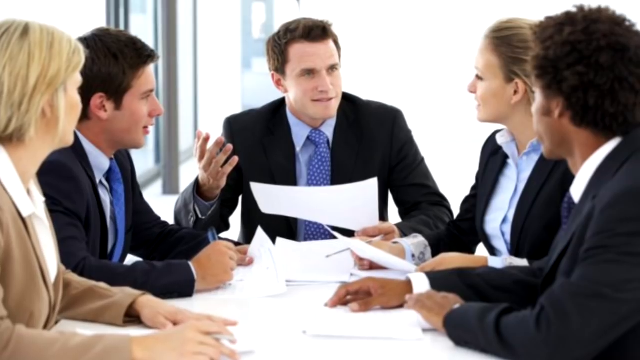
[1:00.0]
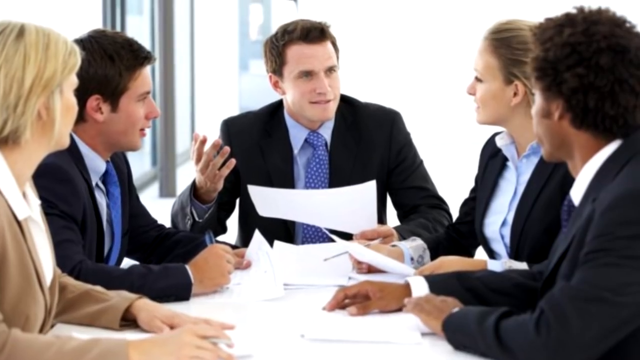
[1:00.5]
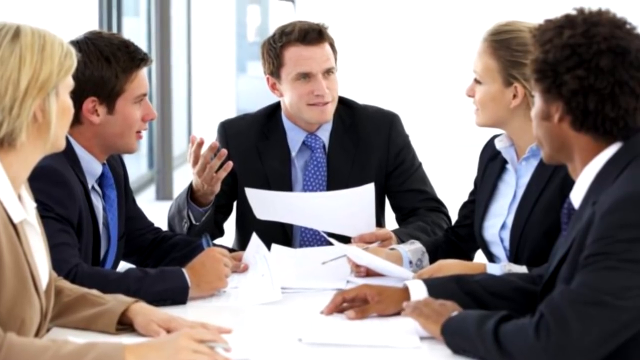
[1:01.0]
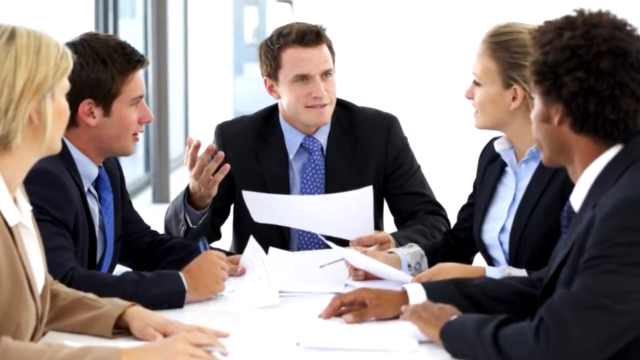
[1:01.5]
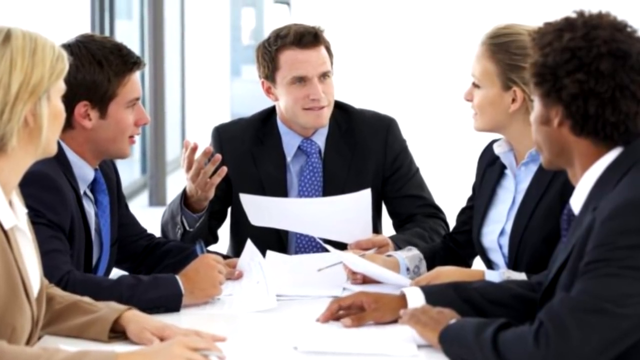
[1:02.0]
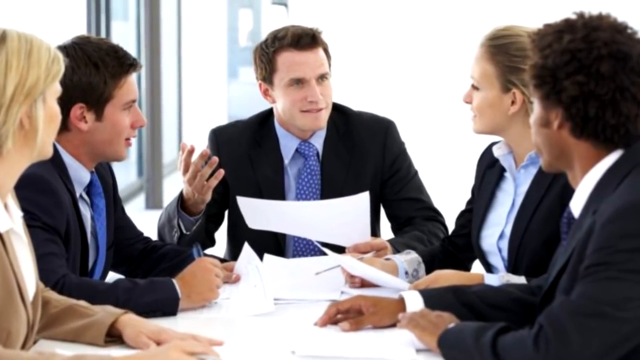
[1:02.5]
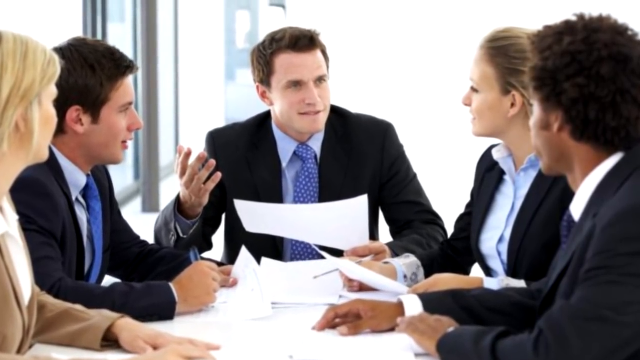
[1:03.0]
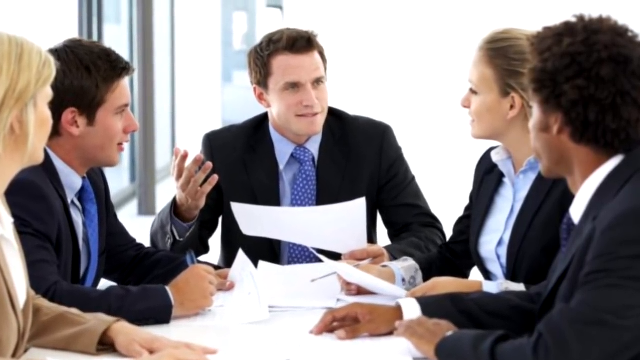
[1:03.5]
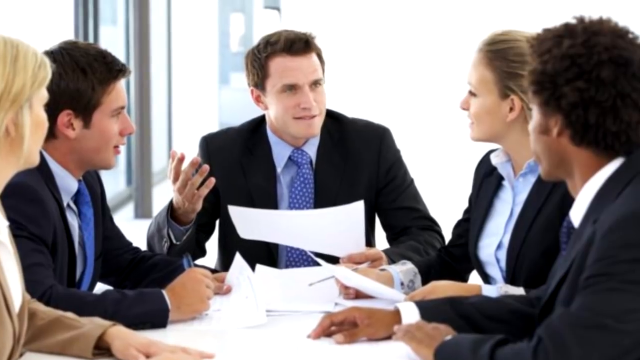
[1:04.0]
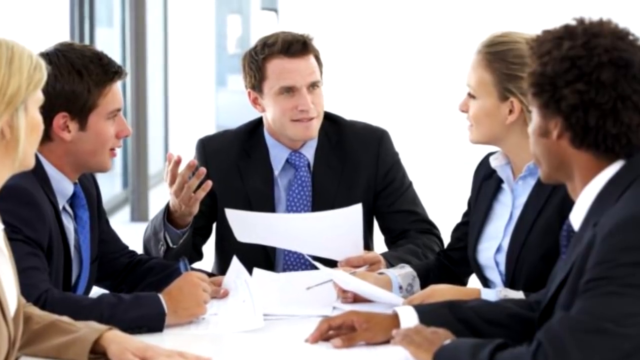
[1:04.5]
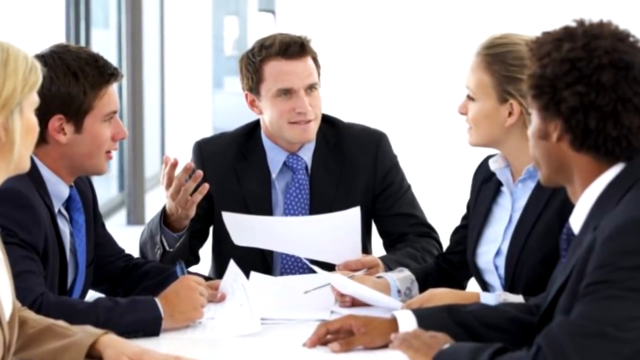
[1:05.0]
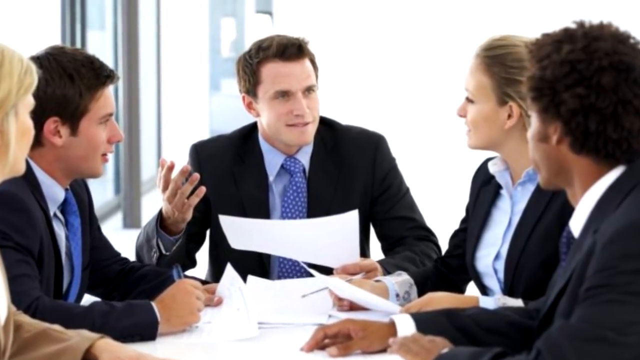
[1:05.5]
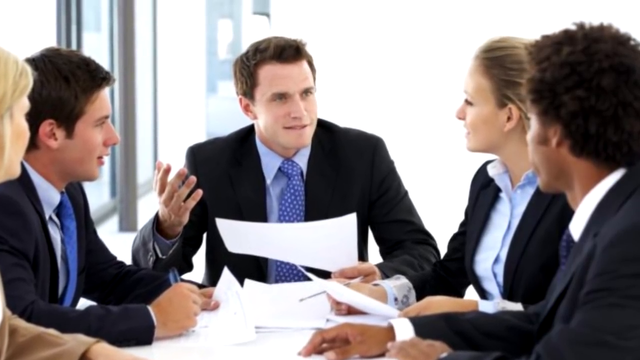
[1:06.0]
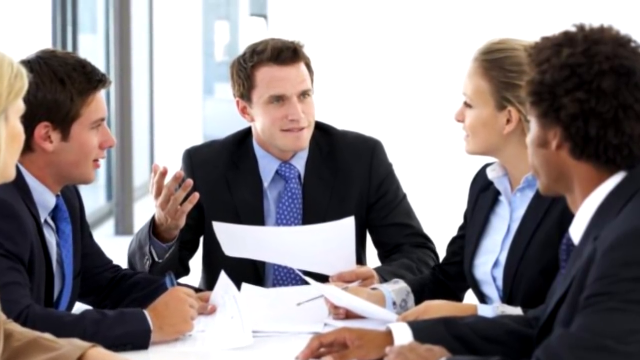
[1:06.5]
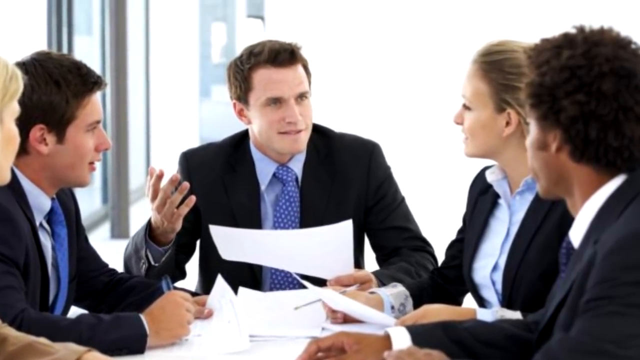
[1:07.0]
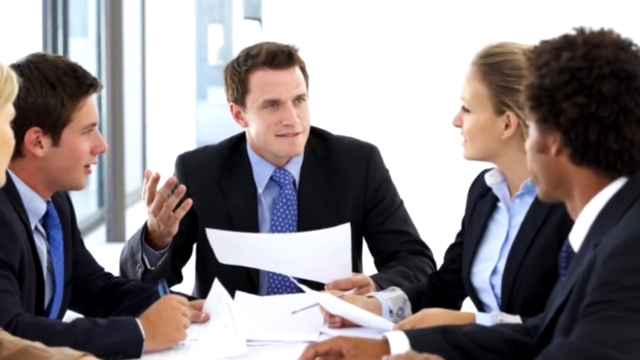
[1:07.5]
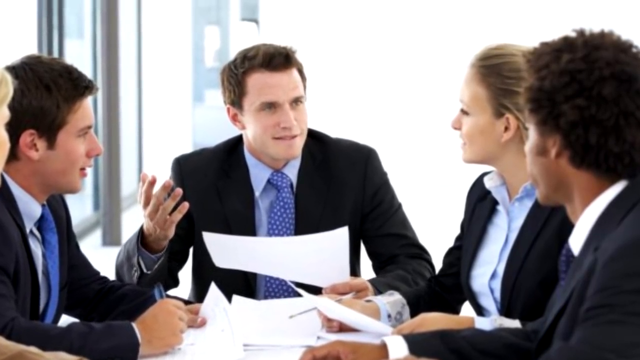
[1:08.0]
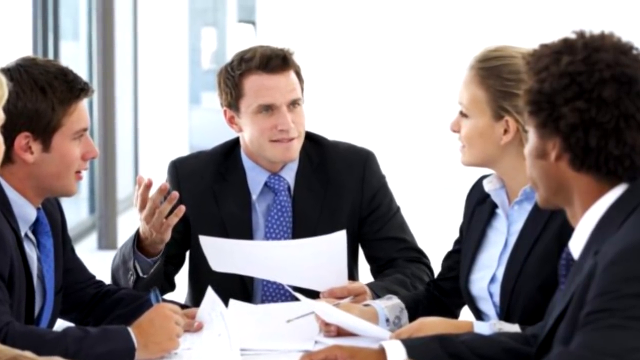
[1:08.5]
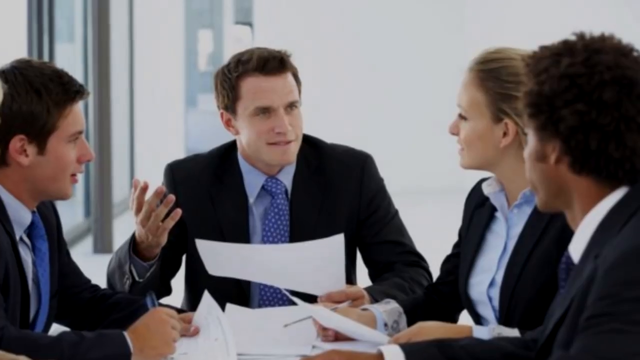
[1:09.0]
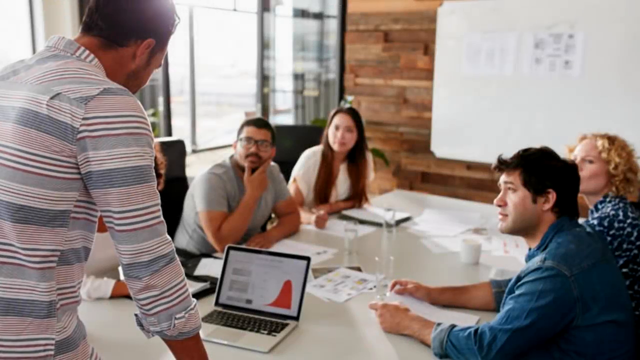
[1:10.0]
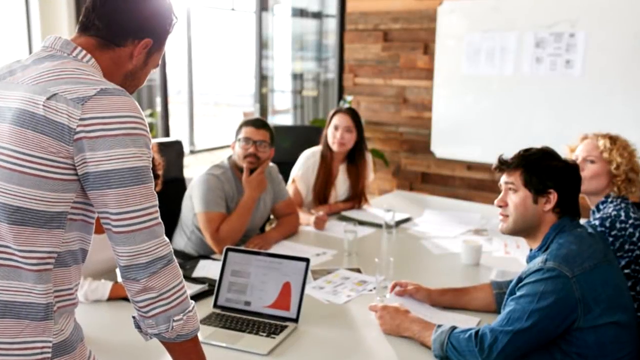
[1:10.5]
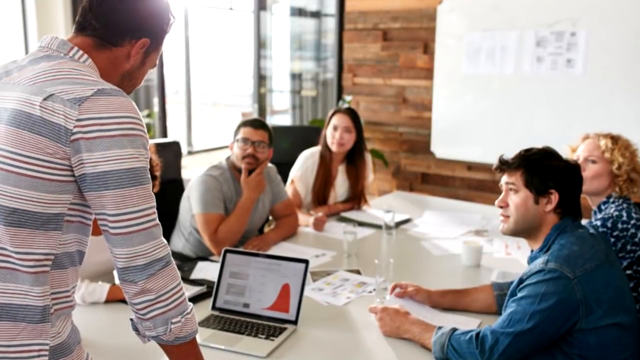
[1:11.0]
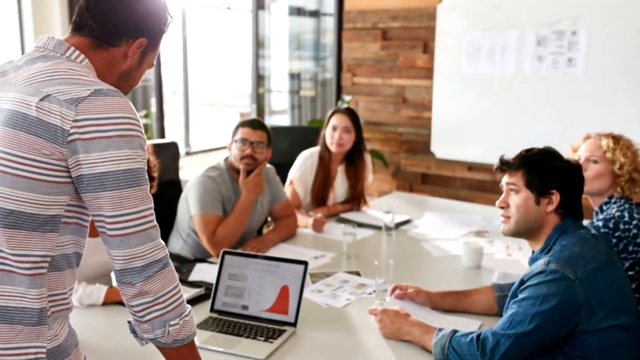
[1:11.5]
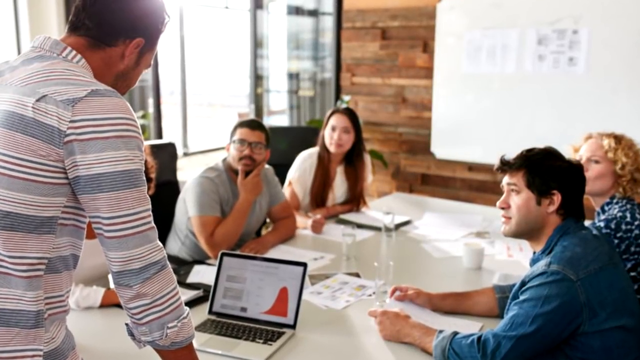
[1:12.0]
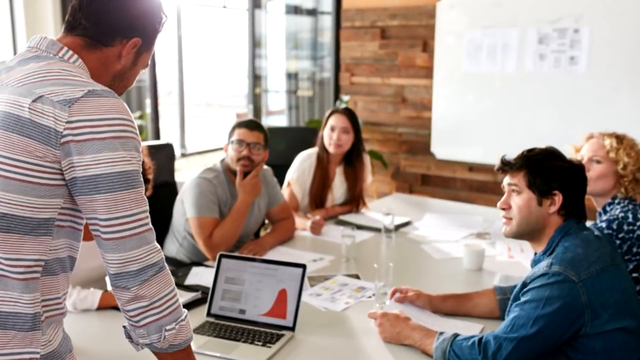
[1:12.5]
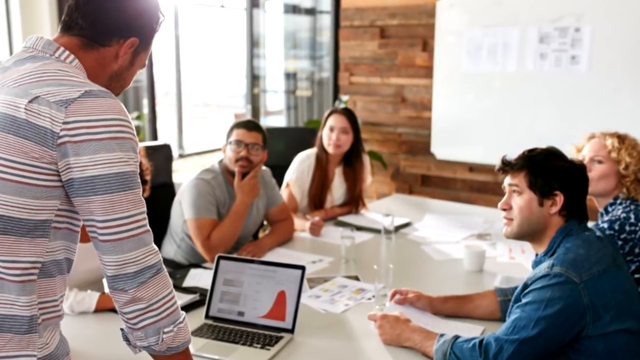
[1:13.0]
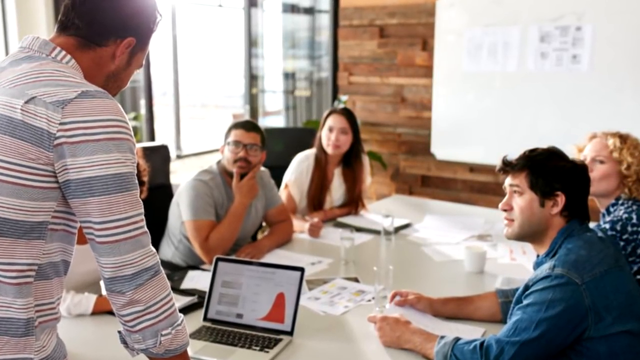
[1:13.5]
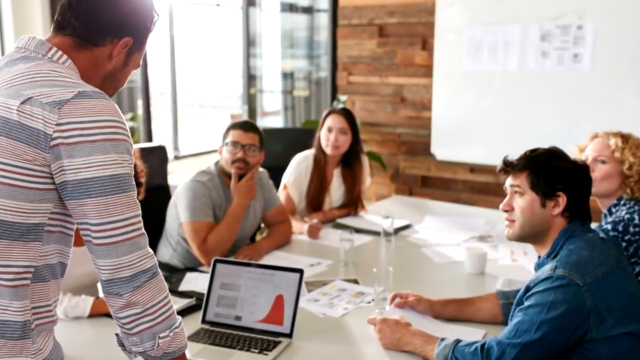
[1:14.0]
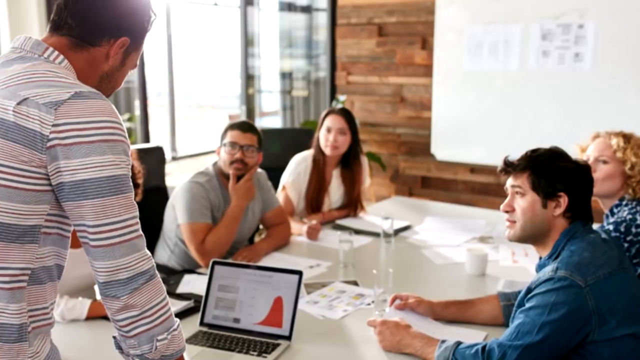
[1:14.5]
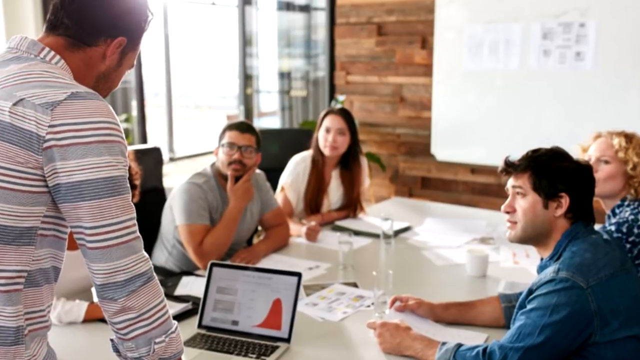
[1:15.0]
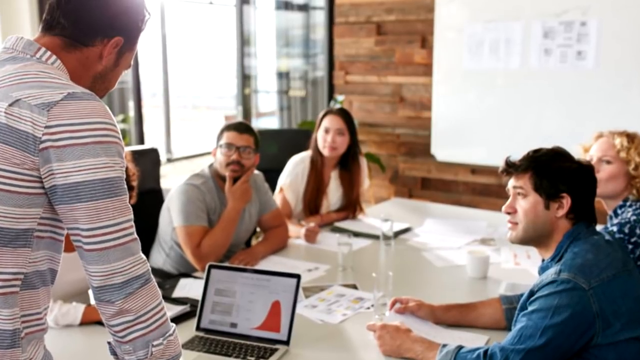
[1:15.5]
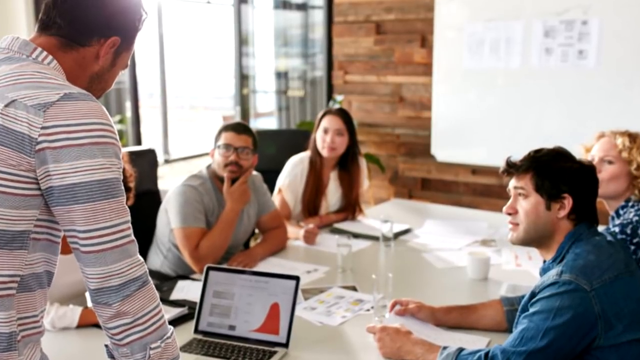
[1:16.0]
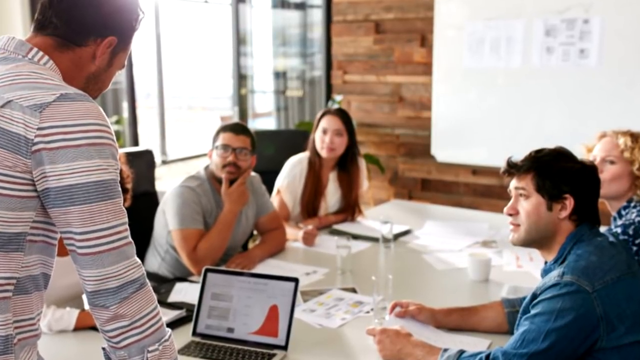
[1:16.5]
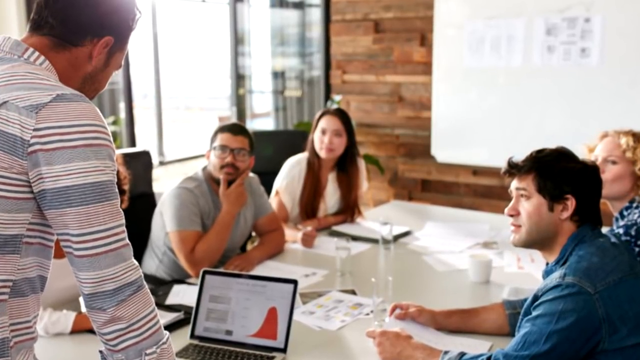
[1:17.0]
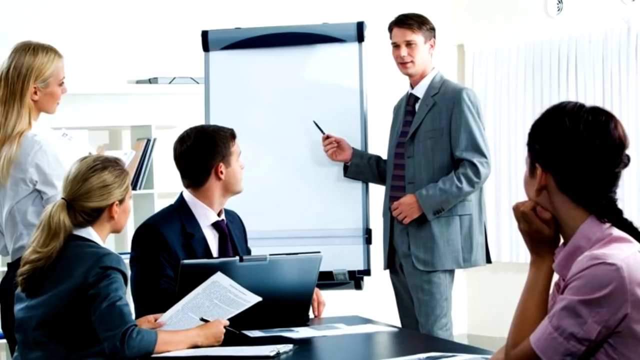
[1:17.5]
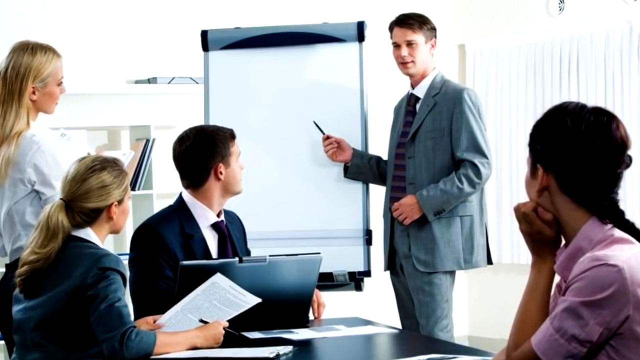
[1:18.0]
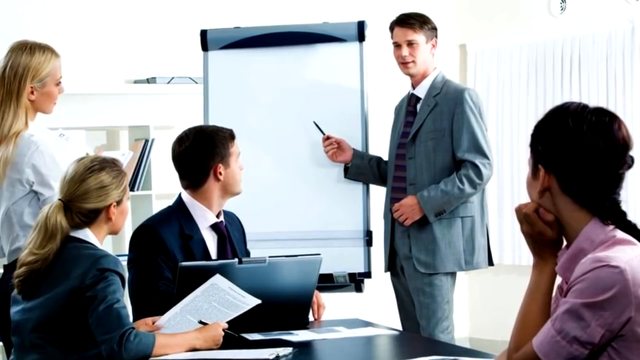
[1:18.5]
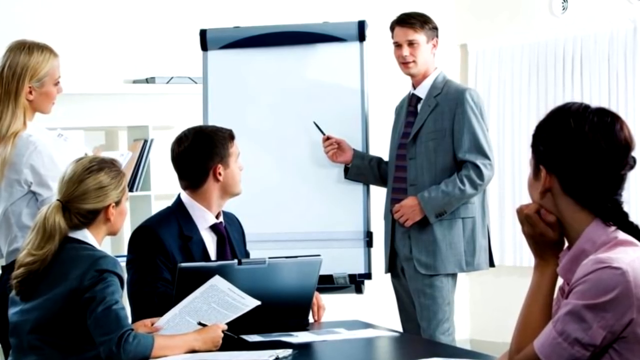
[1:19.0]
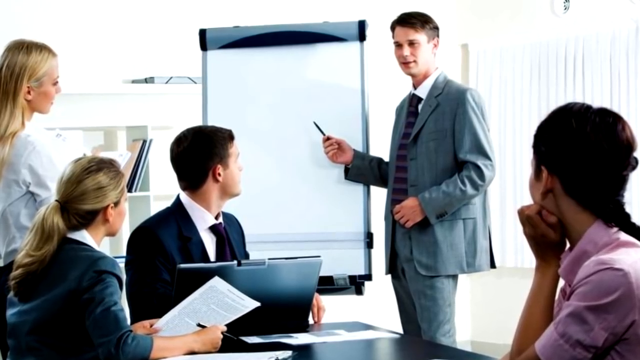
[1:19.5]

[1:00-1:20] Another office meeting scene shows a man sitting at the head of a table with two people on either side. The three men are wearing tuxes, and the two women are wearing jackets with collared shirts. A bunch of papers are on the table, the man at the head of the table is holding one of the papers, and some pens are visible. The next office meeting scene has a wall made of pieces of wood and some kind of presentation on the board. A group of people sit at a table, at the head of which a man is standing up, and they are all looking at him. These people are dressed more casually, in everyday wear, and some type of graph is on the man's computer screen. Another meeting follows, in which a man stands at an easel board with about four other people looking at him.